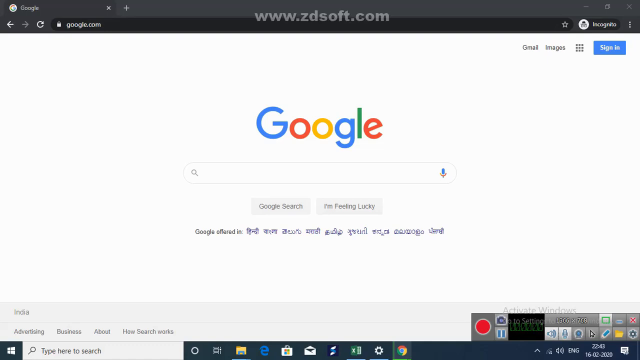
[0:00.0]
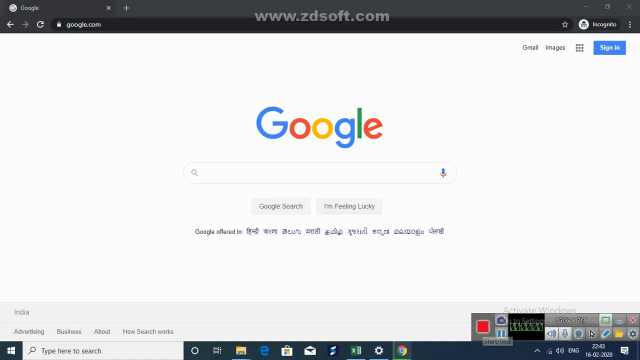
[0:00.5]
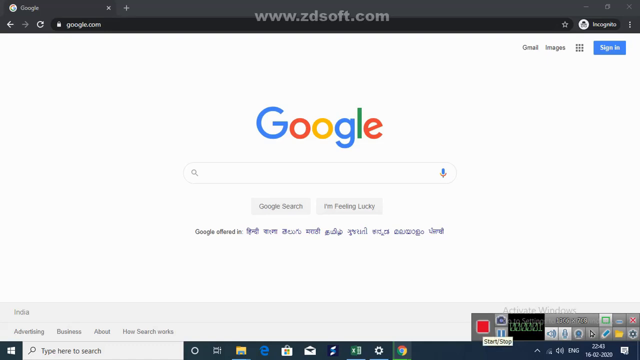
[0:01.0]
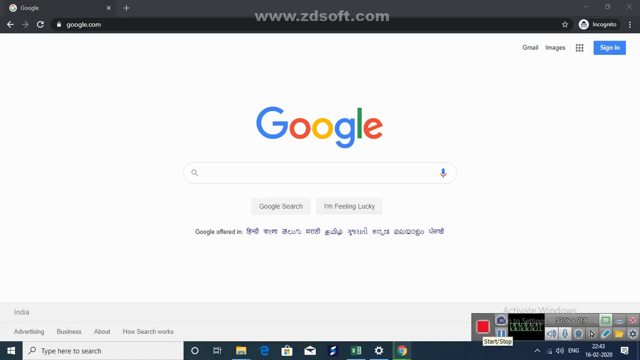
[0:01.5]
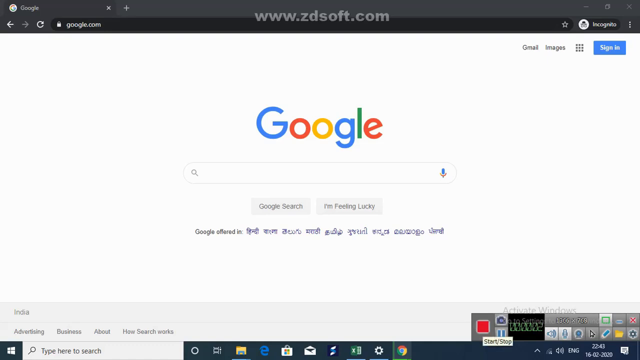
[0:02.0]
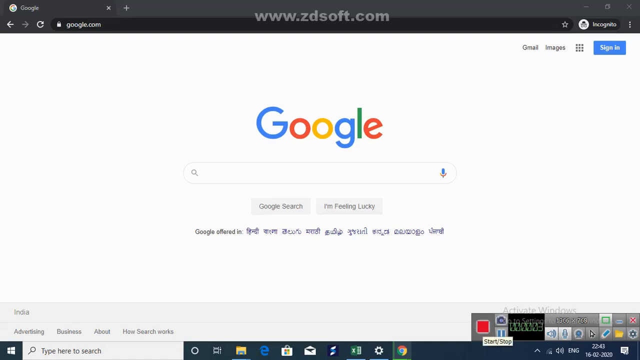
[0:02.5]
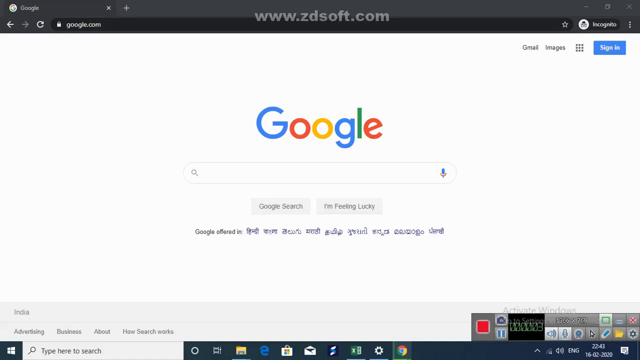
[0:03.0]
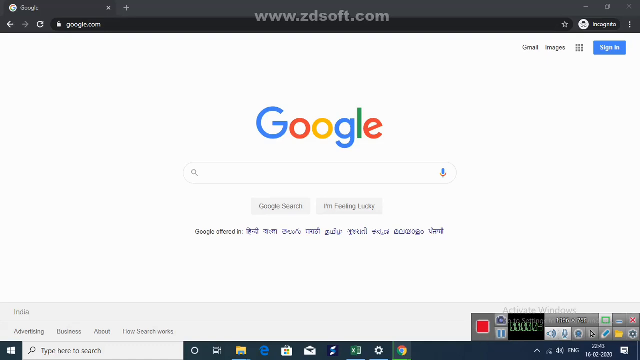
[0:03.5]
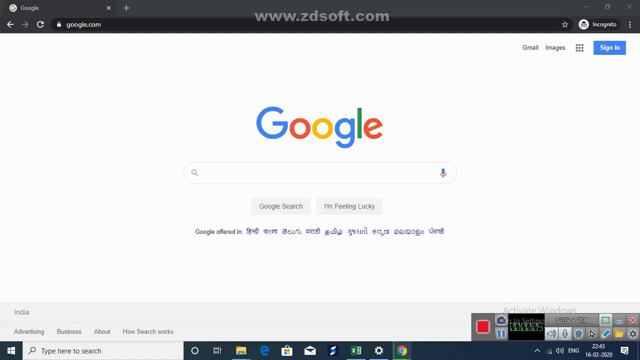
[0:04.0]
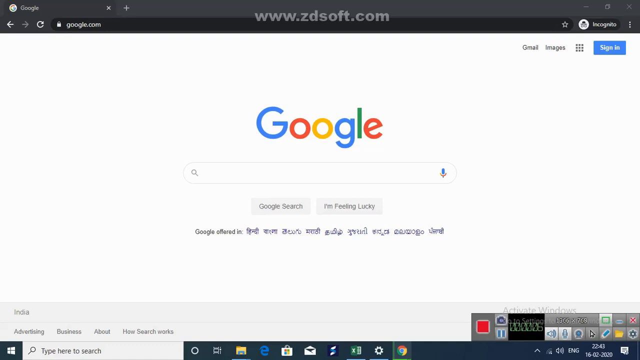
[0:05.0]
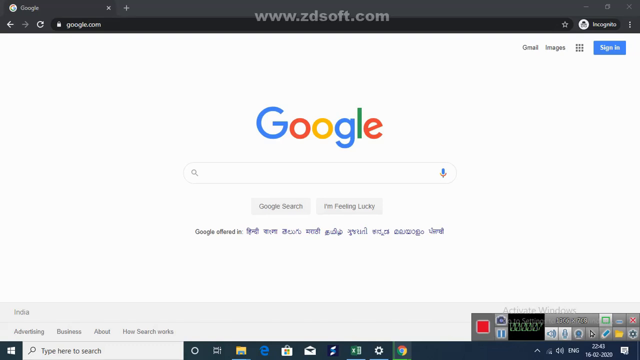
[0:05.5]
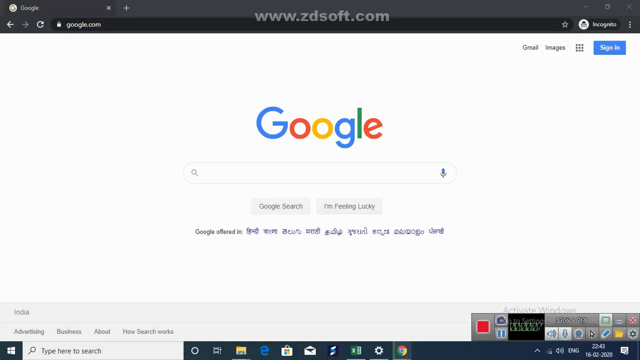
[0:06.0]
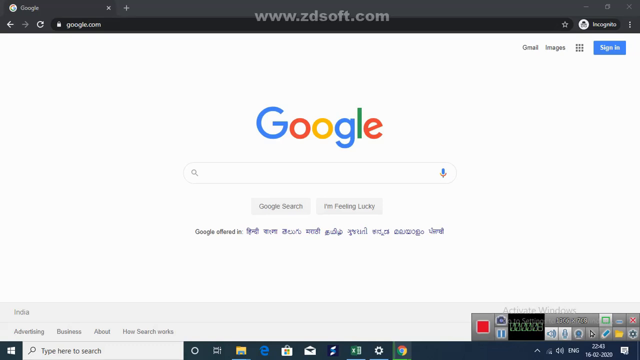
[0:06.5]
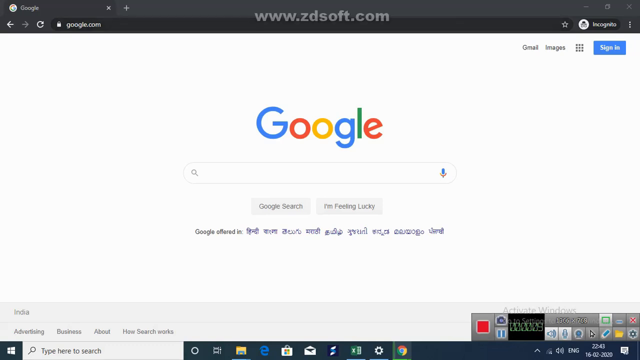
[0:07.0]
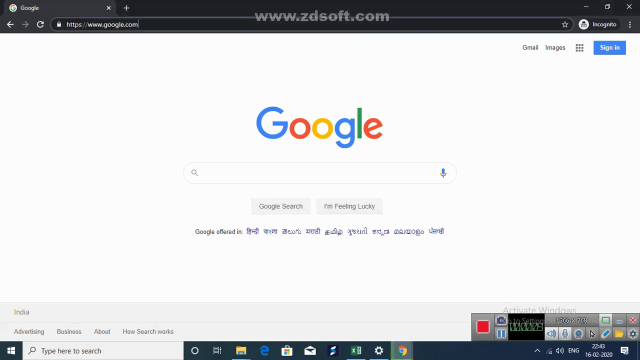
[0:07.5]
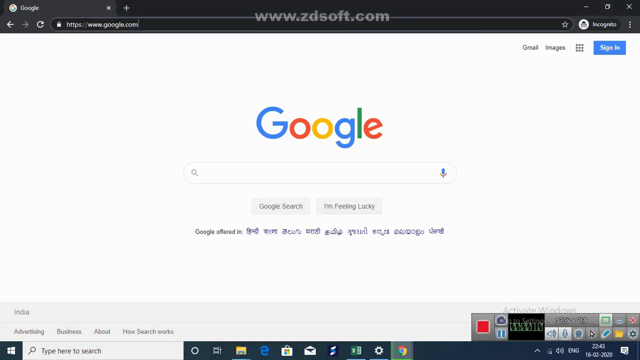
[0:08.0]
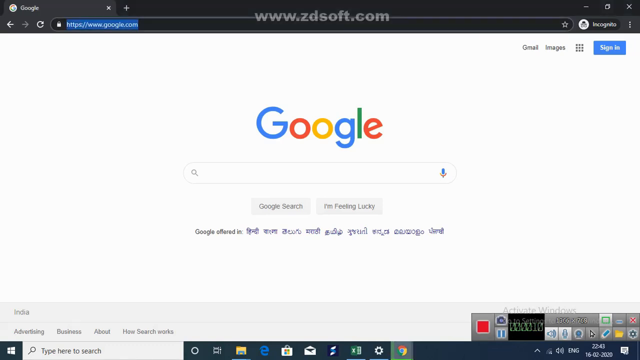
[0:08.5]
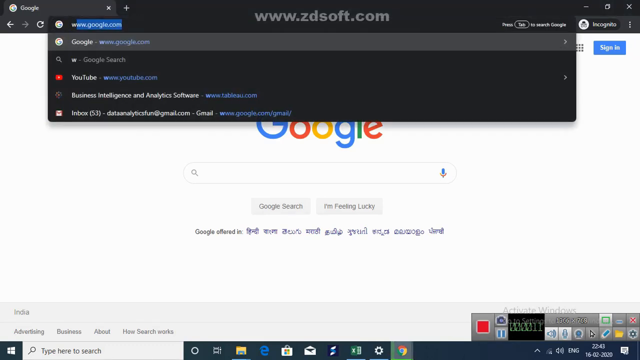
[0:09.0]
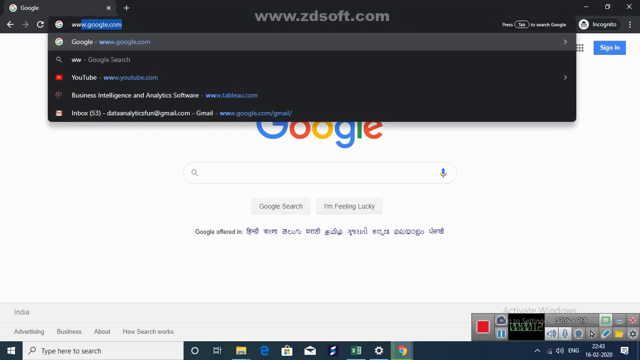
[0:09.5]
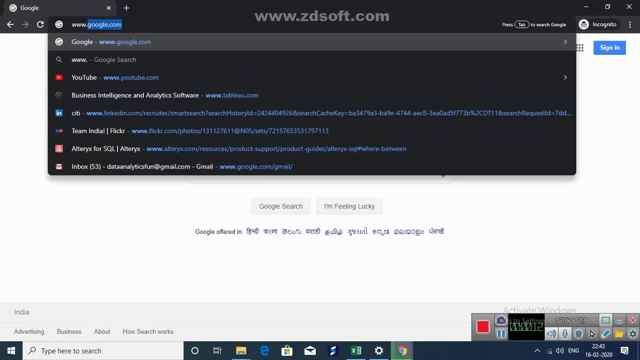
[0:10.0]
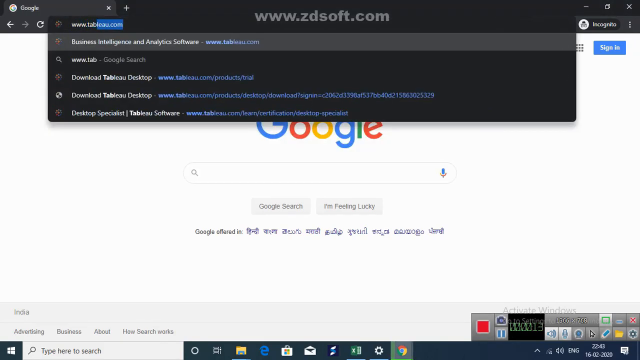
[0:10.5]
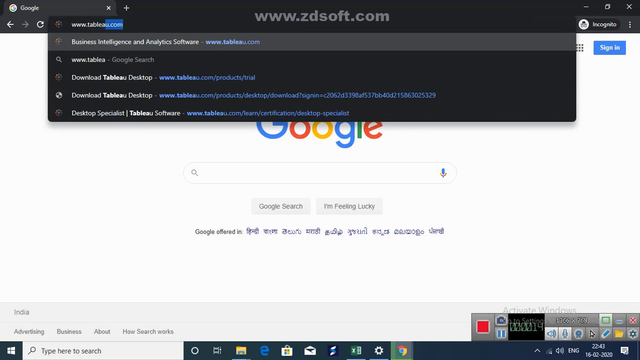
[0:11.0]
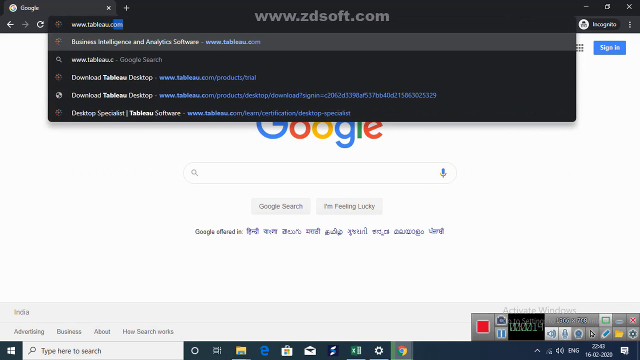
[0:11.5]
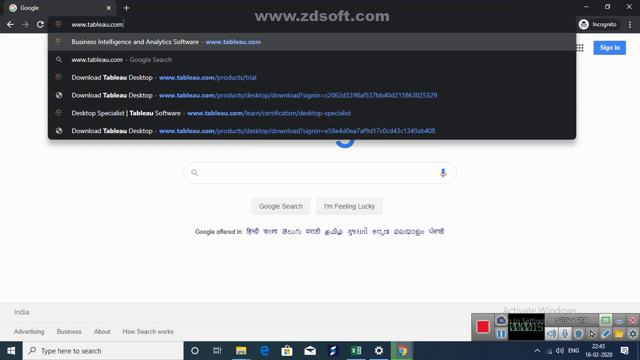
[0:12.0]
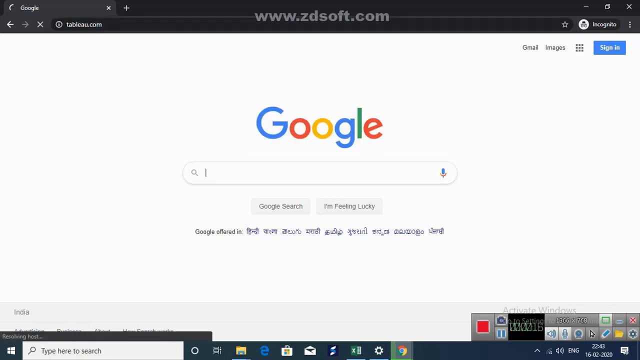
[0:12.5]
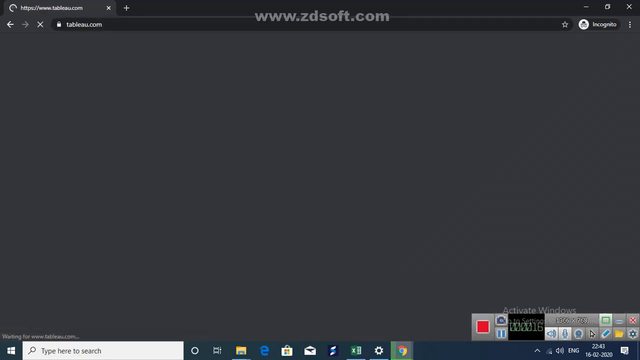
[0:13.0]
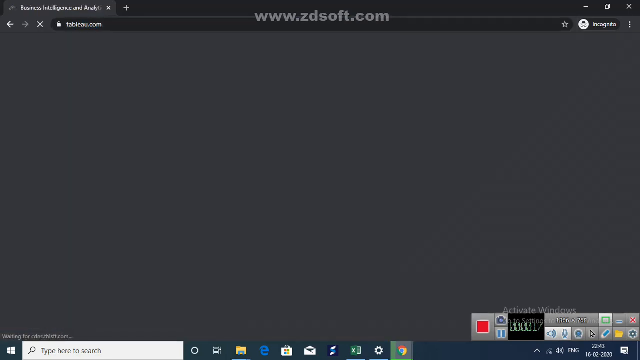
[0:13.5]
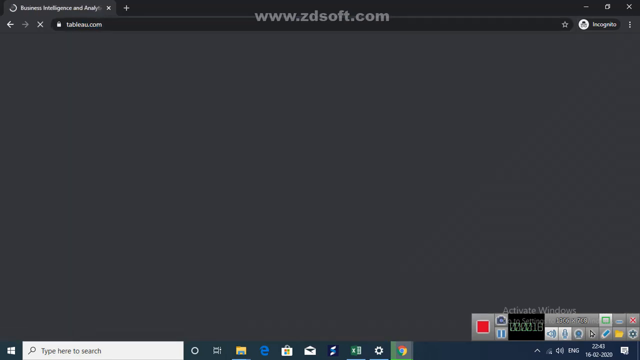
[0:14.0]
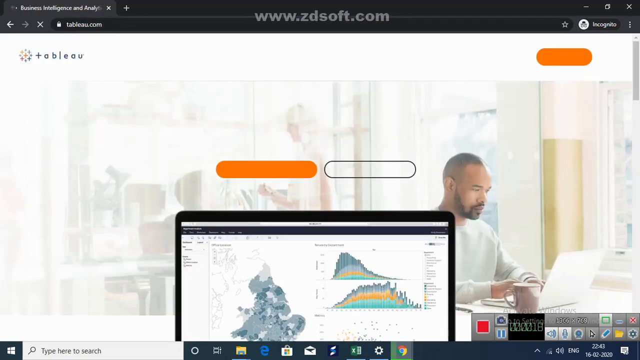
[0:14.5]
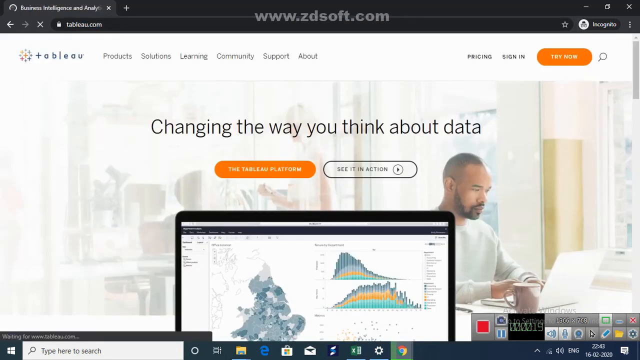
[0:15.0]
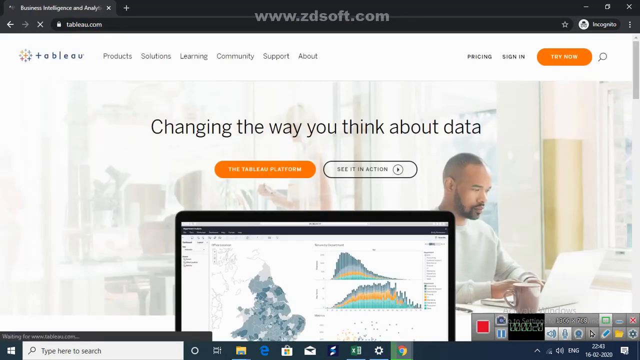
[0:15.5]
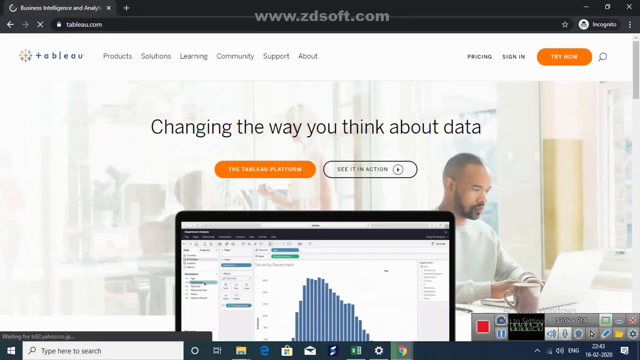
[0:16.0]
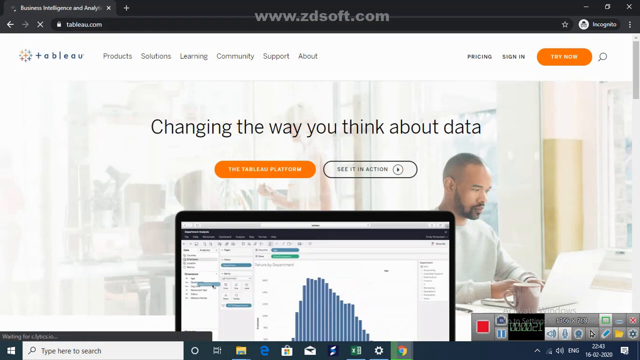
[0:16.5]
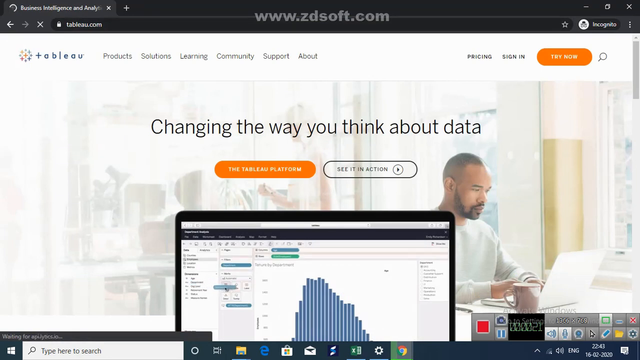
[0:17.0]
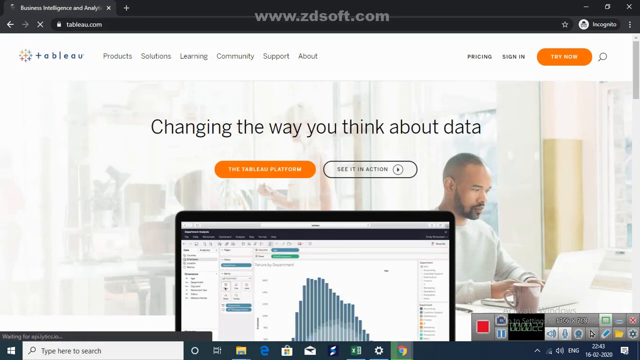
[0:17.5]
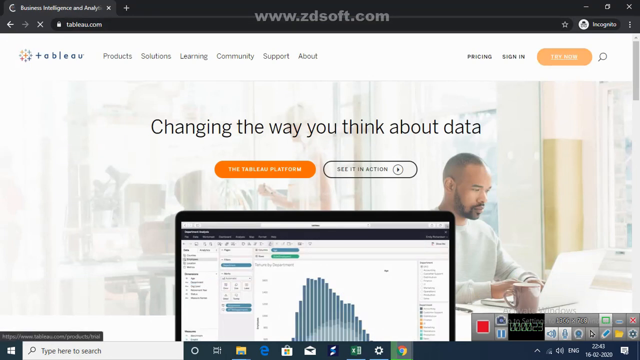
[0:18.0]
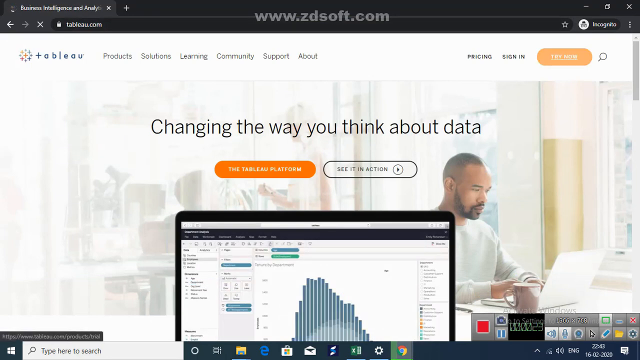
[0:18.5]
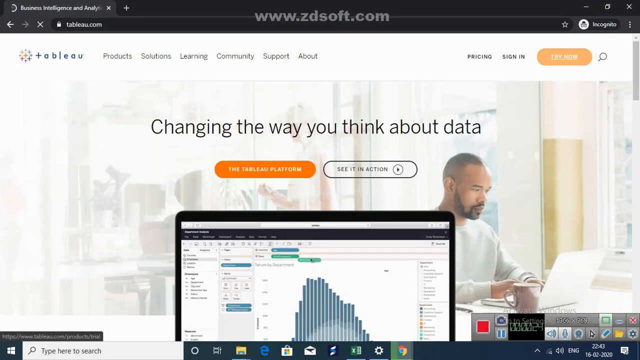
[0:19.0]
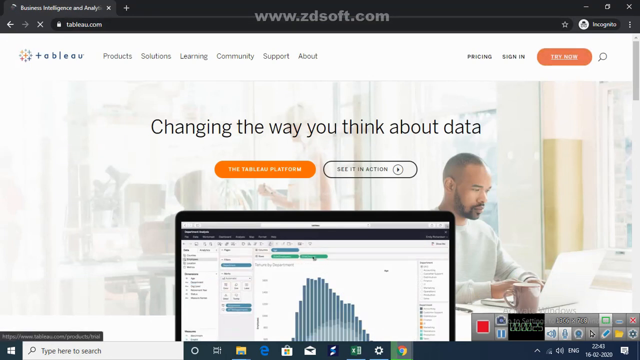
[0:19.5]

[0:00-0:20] The video starts on a Google home screen with the typical Google page elements: "Google" at the top, a search bar below it, and below that "Google search". A black bar runs across the top of the screen with "www.zdsoft.com" in white letters. At the bottom are a number of items, possibly apps, and the cursor clicks on one of them. A search bar then appears at the top and something is typed into the URL. The browser goes to a centered webpage that reads "changing the way you think about data" in black letters. Below this on the right side is an African American man with a short beard sitting on a desk with his fingers on the keys of a laptop. Below that is an orange button with white letters ending in "platform", and to its right is a white button that says "see it in action". Below that is a computer screen showing a bar chart or bar graph.